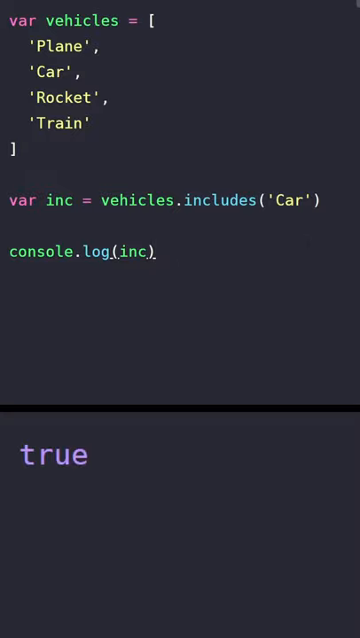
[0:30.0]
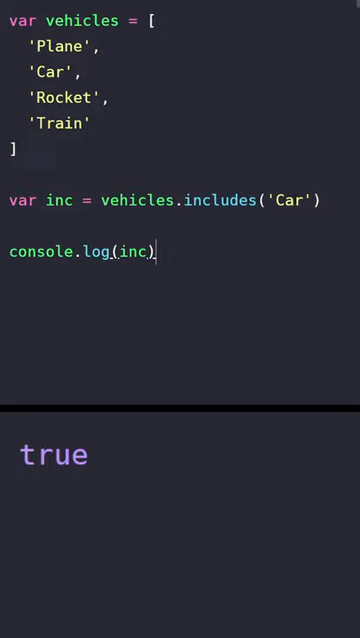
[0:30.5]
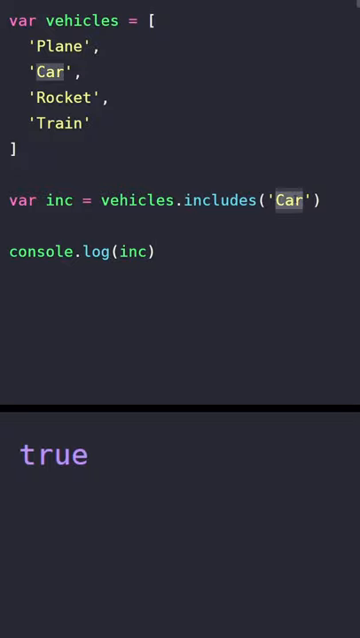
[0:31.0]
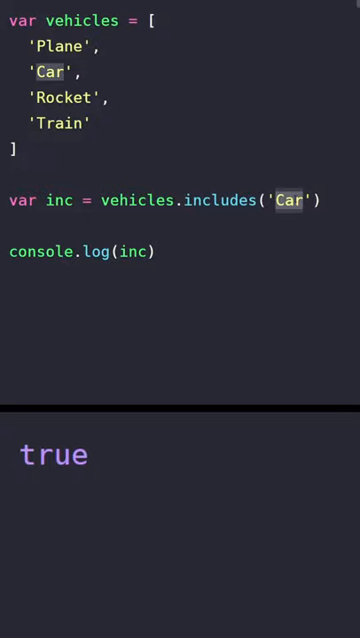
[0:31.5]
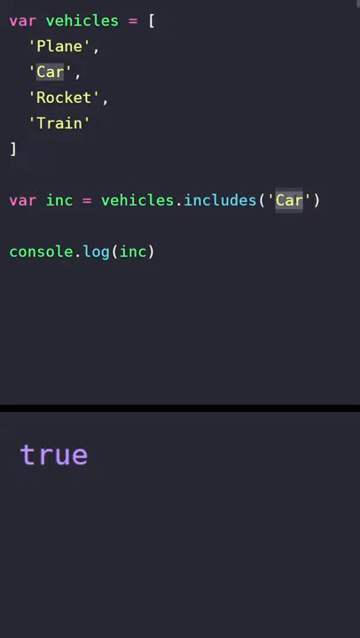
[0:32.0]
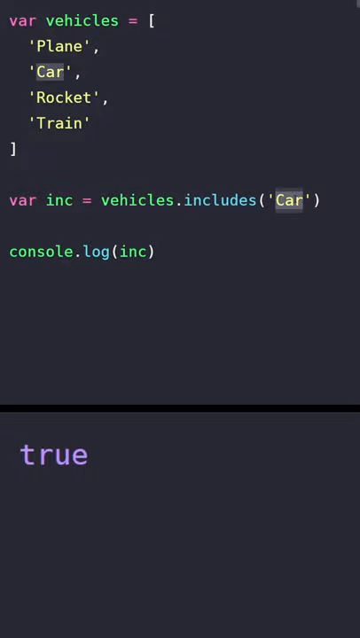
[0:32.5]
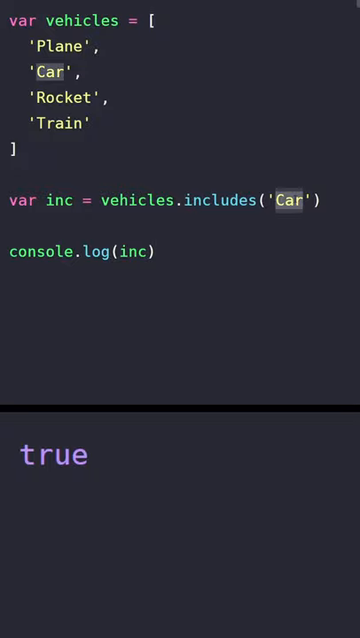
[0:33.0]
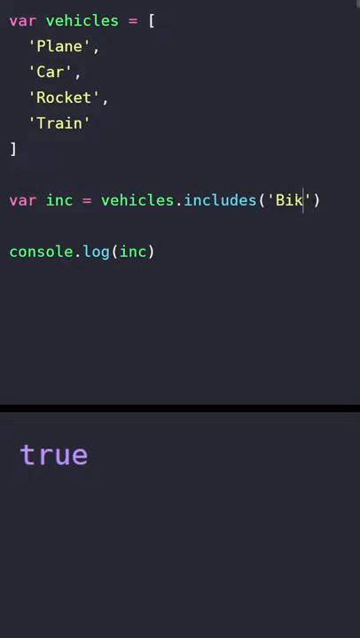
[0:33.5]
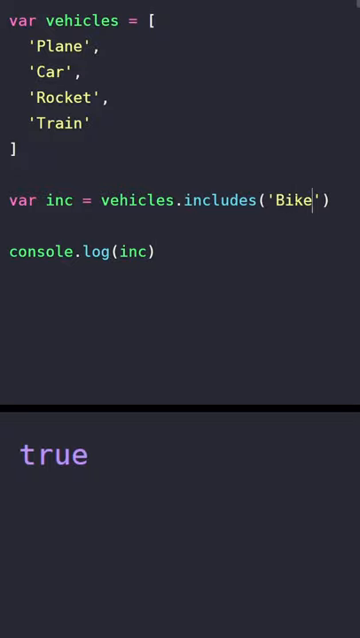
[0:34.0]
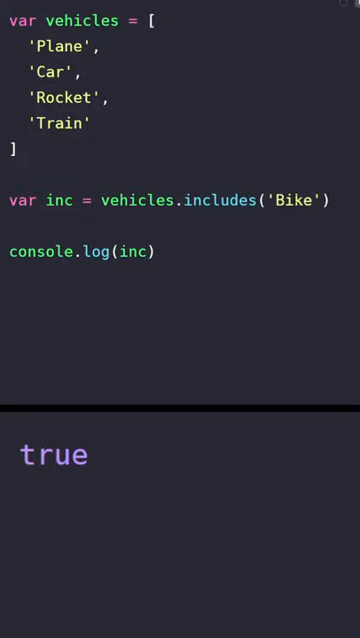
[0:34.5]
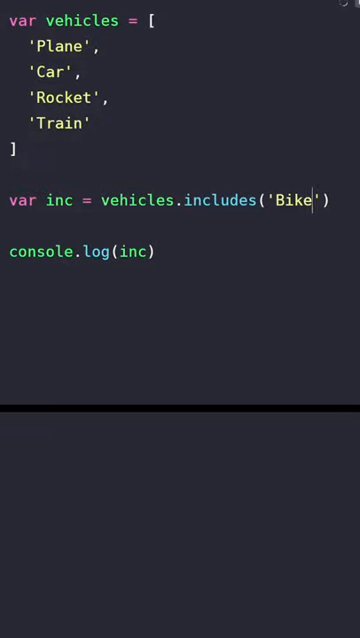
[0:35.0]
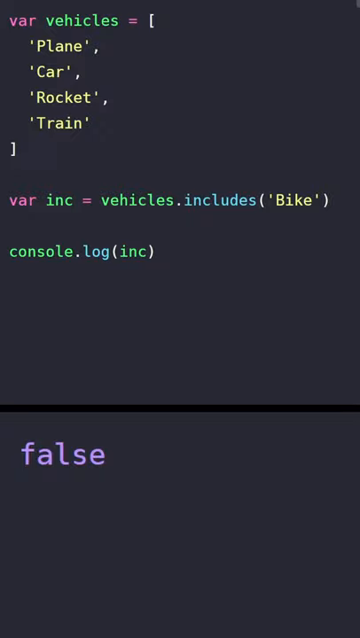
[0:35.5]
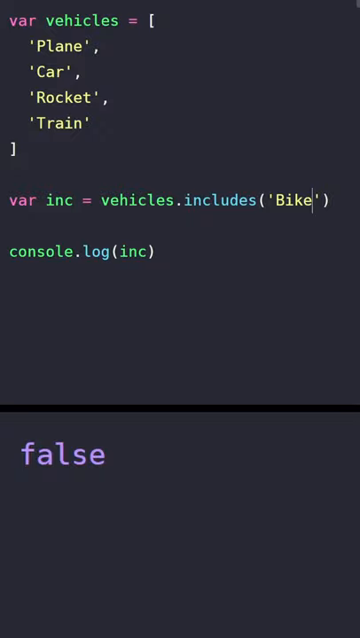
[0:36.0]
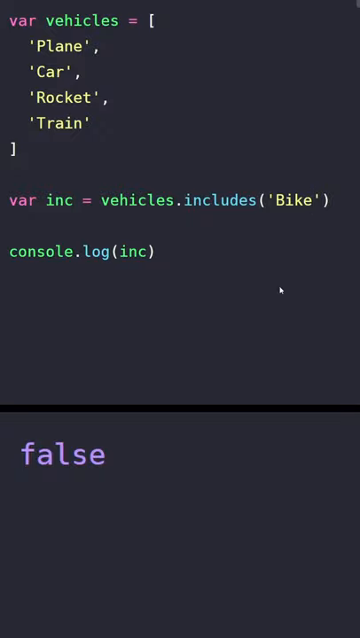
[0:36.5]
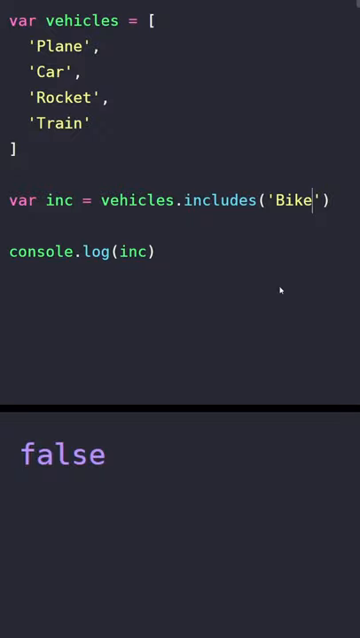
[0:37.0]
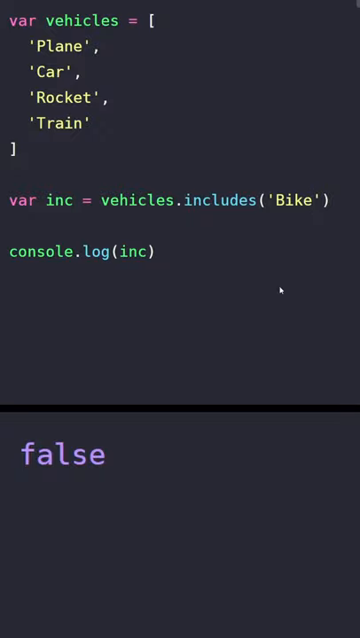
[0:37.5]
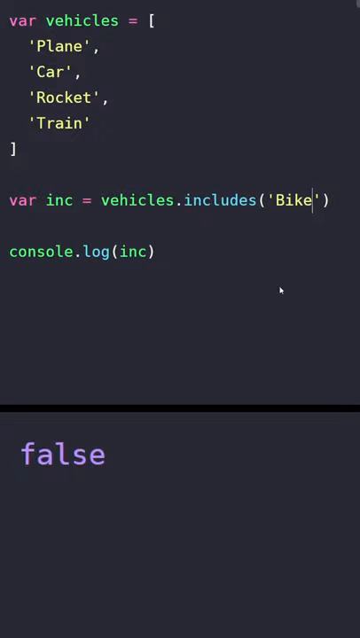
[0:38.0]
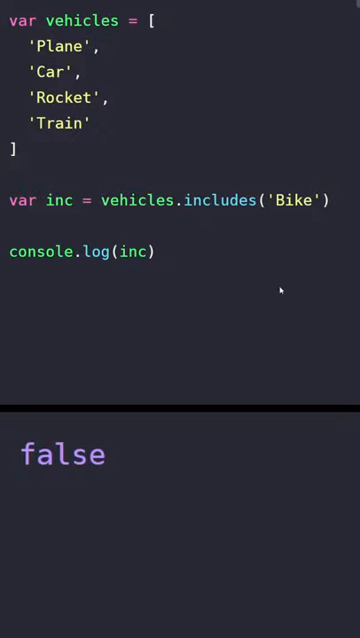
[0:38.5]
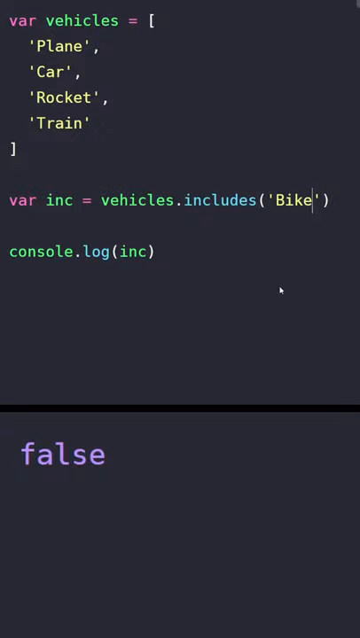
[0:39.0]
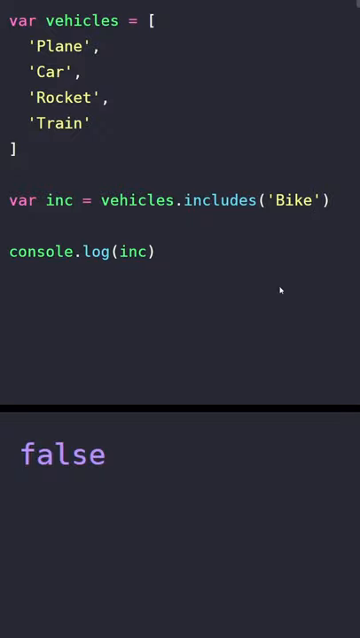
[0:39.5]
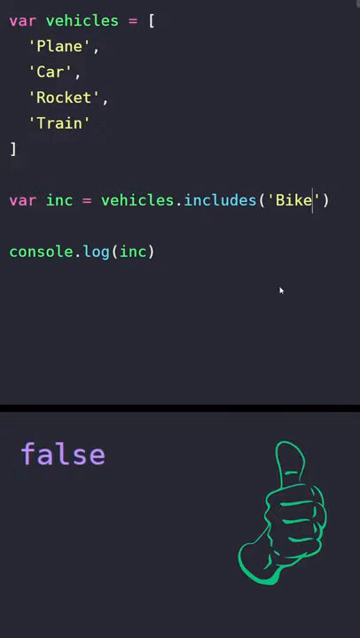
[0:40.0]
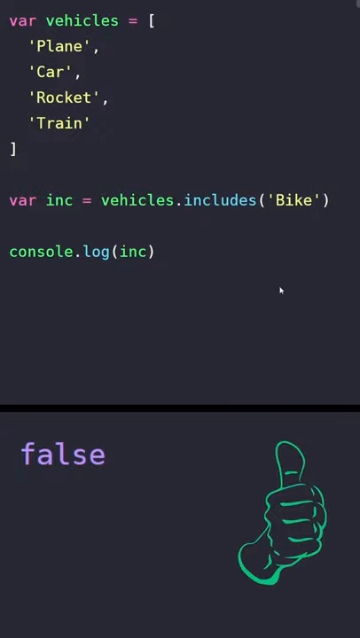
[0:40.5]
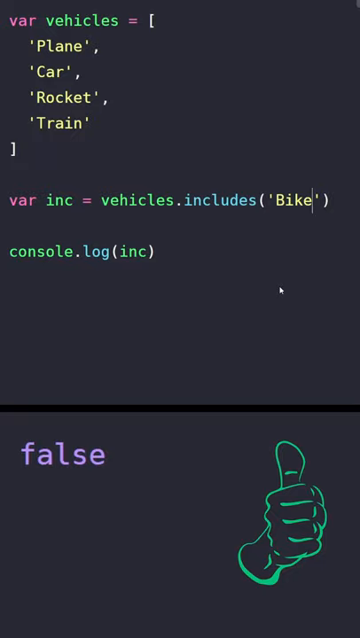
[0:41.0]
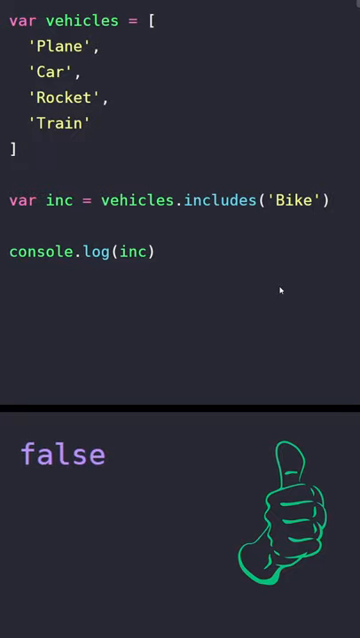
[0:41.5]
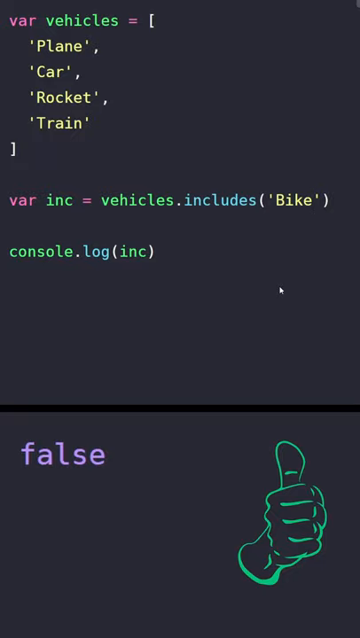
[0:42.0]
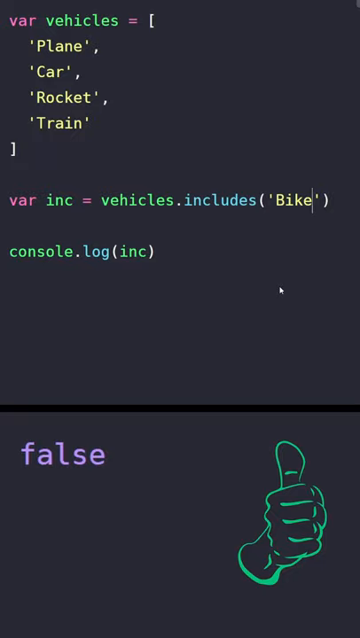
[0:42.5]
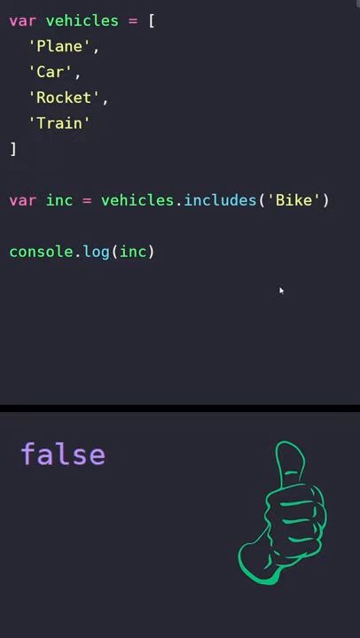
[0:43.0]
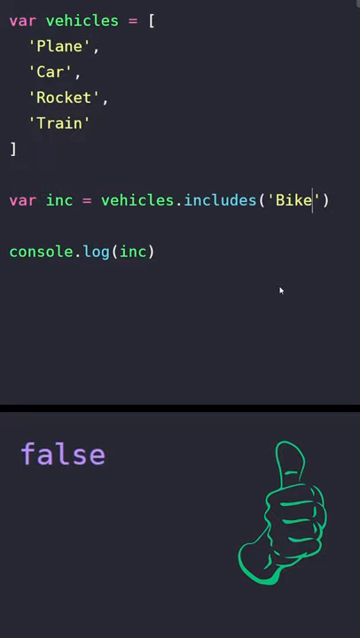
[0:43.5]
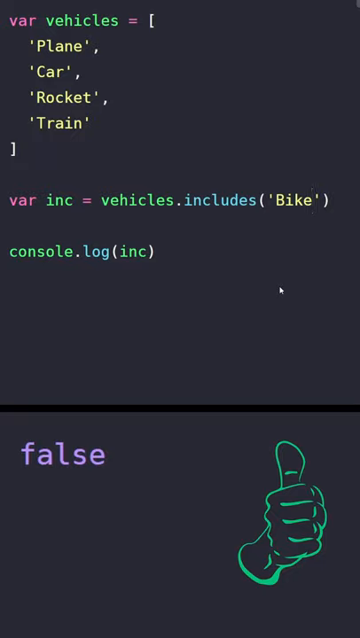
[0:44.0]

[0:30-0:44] The word car is in brackets in the code. He highlights it and replaces it with the word bike. The bottom screen then changes to "false" in purple text, apparently because bike is not in the vehicle list at the top of the code, which includes plane, car, rocket and train. On the right side of the second screen, a green thumbs-up picture appears, showing four fingers at the bottom and the thumb sticking up. The video then ends.